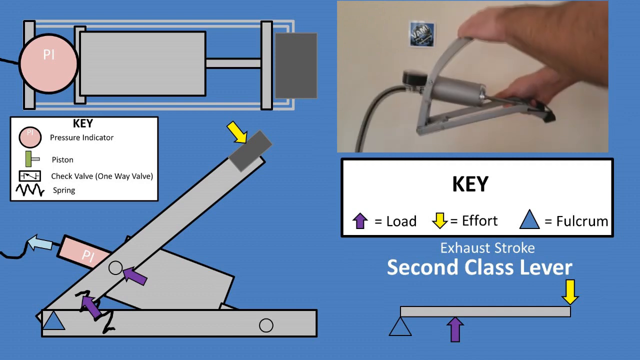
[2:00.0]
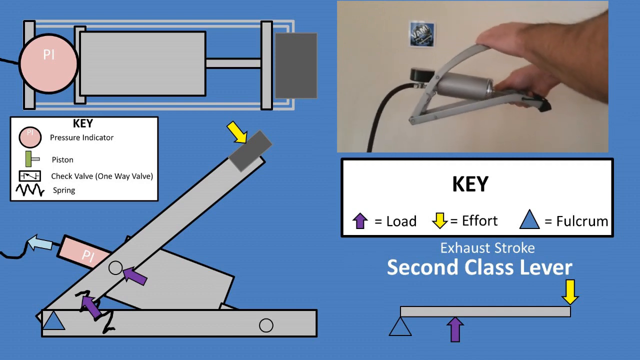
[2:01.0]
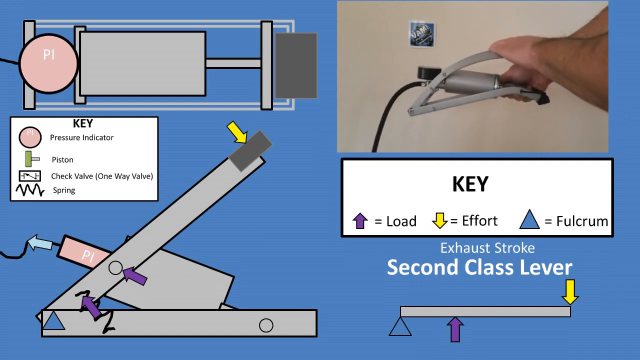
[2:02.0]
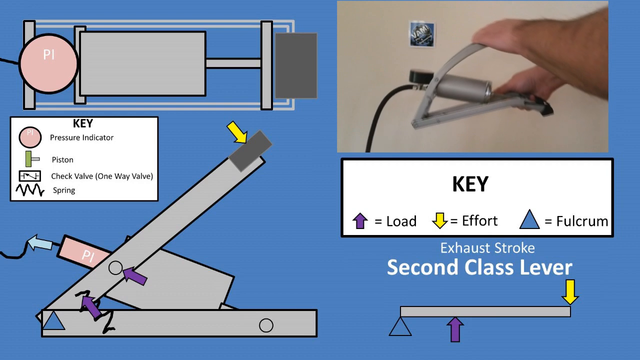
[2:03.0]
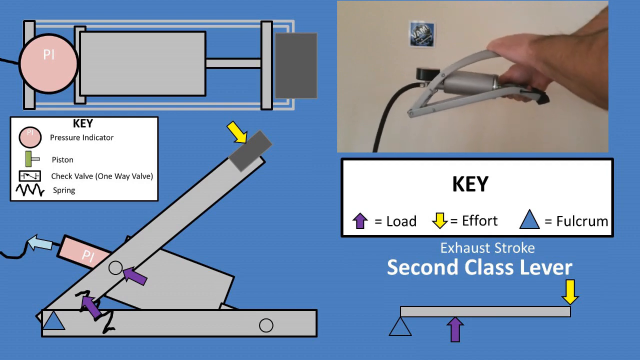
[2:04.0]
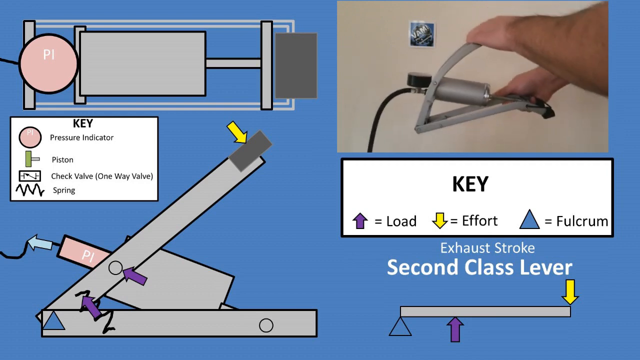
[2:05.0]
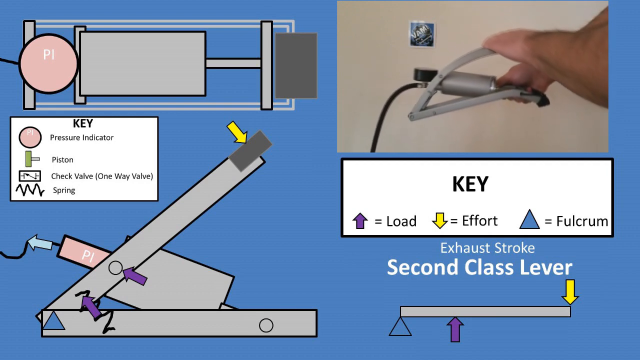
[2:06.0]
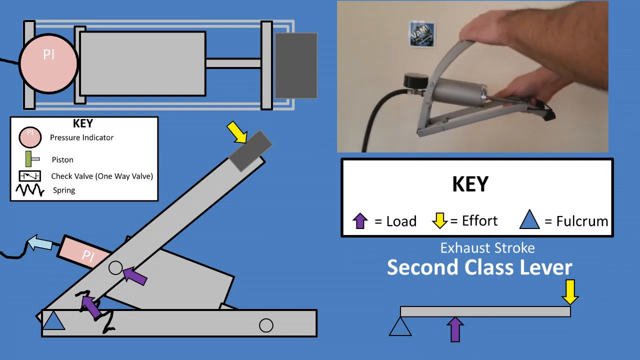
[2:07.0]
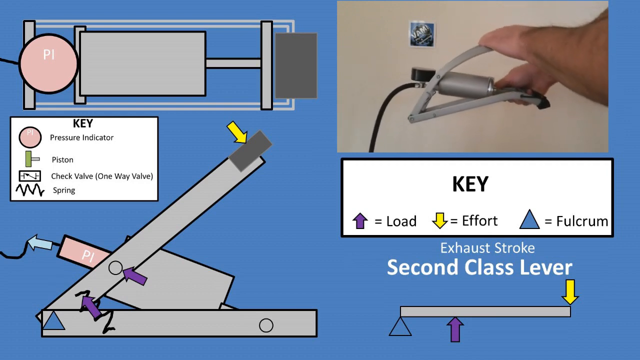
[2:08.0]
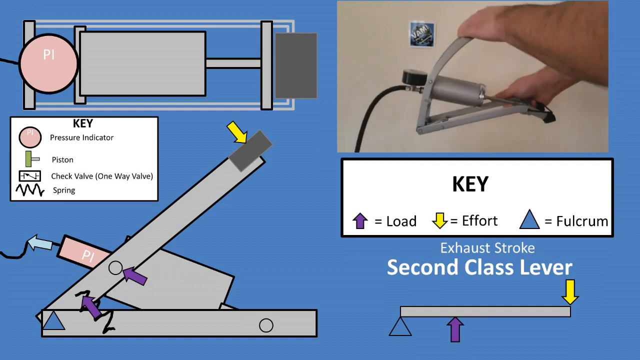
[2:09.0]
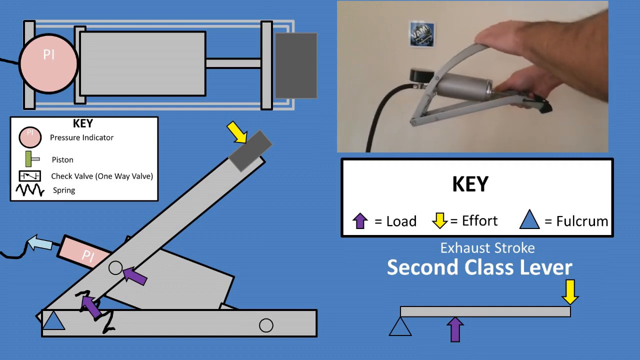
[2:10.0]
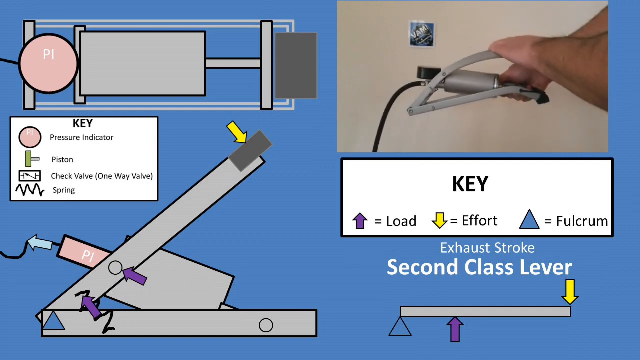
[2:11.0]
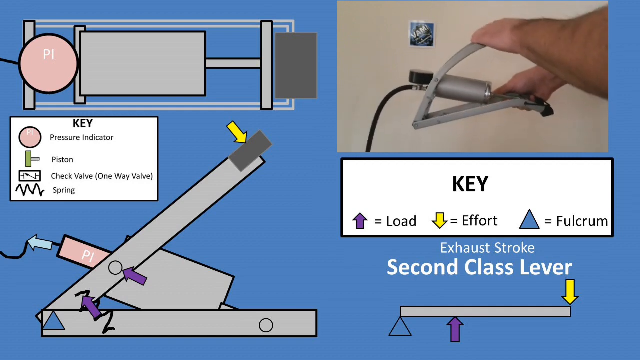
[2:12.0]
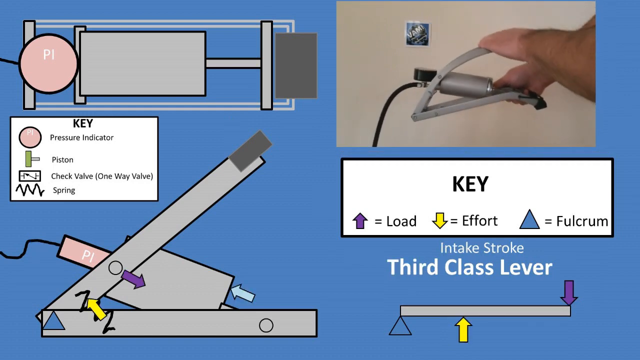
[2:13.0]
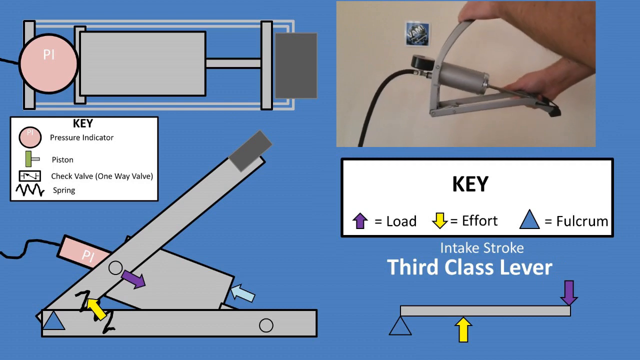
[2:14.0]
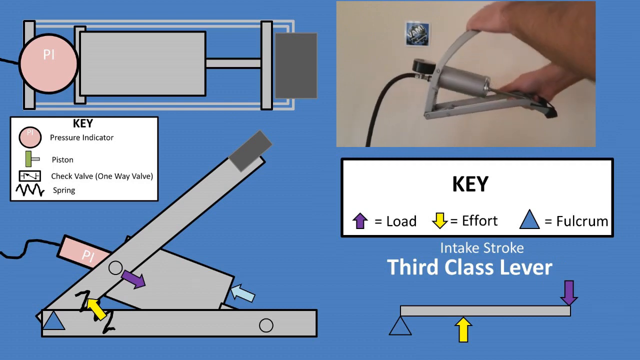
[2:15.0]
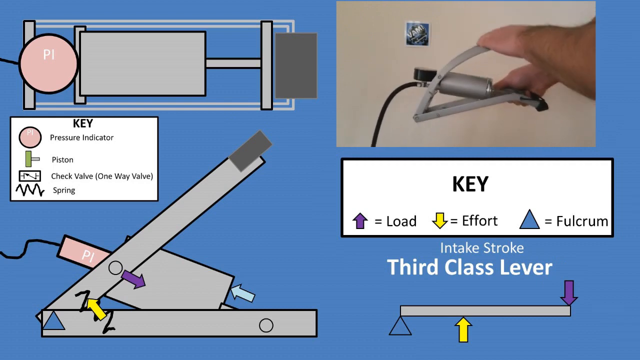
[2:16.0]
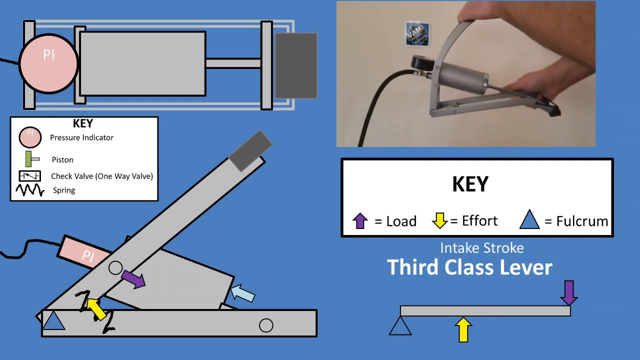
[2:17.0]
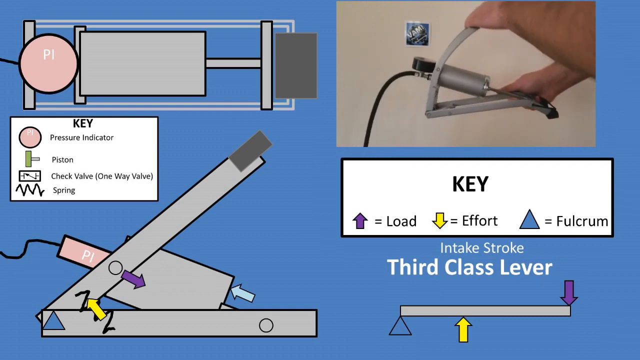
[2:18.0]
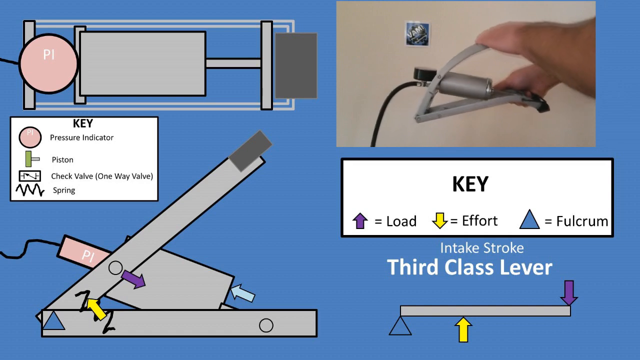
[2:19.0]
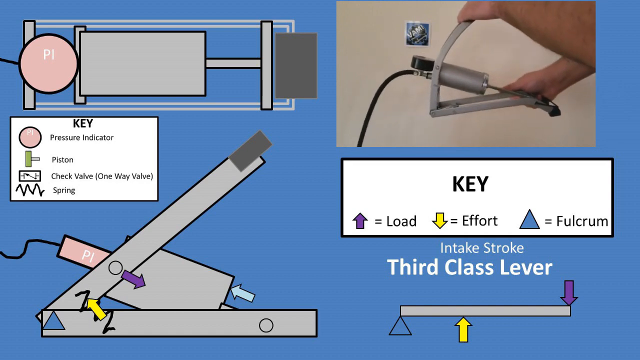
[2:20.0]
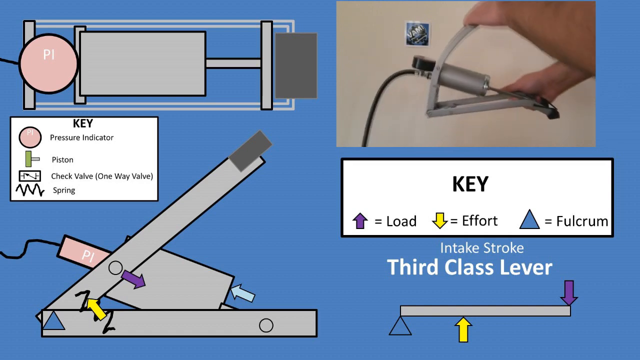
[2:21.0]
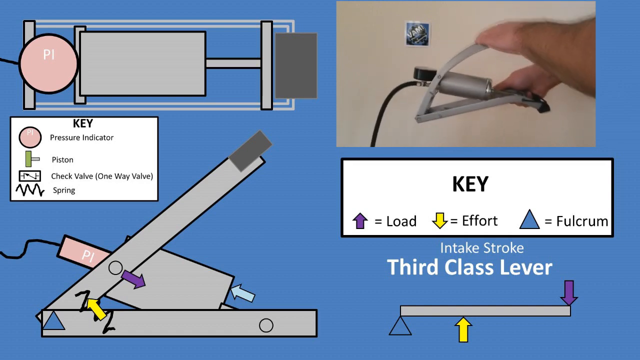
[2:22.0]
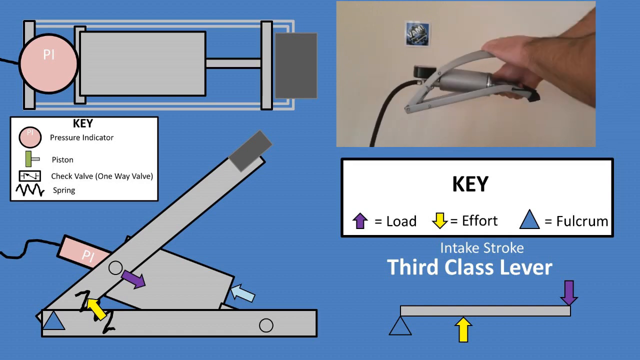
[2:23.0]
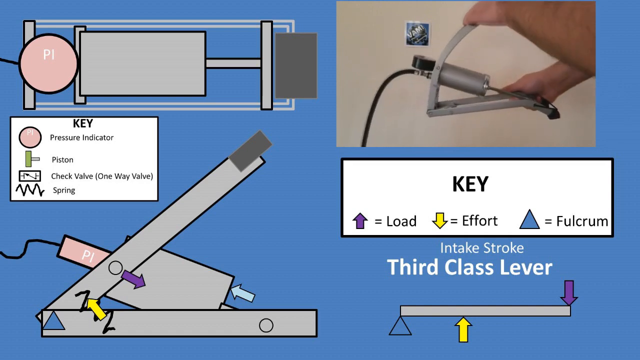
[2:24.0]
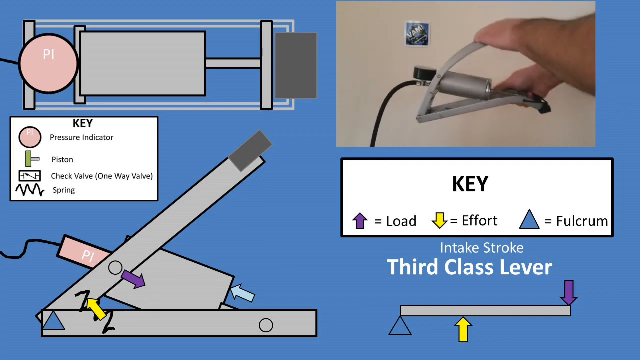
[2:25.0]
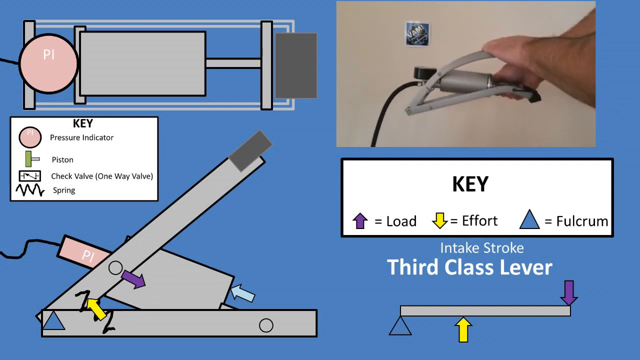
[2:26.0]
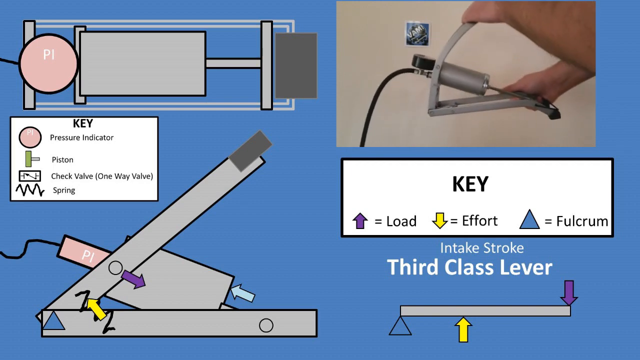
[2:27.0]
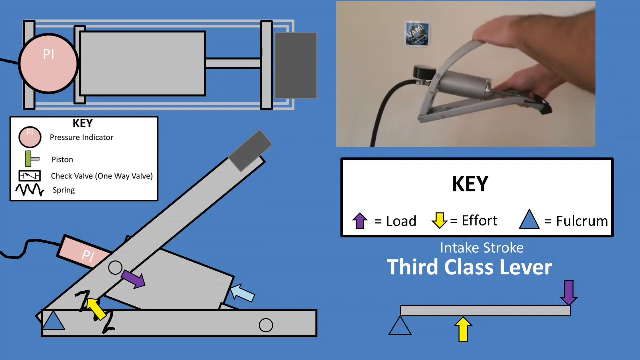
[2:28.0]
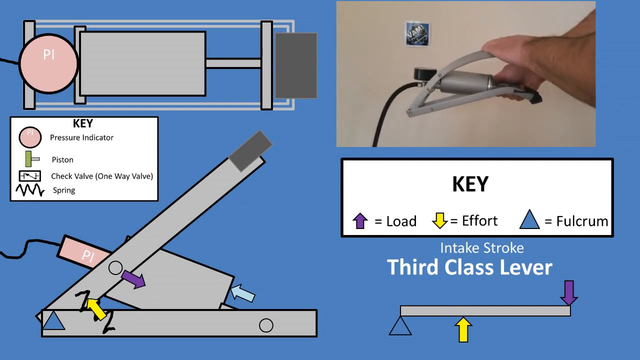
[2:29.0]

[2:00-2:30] The same video repeats in the upper right of the screen, with the person pushing on the two levers and moving the piston, while the diagrams are updated with arrows showing where the fulcrum is and where the effort and load are. A light blue arrow points out of the pressure indicator in the lower left diagram. The video then plays in reverse, repeatedly showing the person opening the device instead of closing it, pulling on the two levers so that the upper piece moves up and the lower piece moves down. The diagrams update to show the load going to the lower right into the piston, the blue arrow going to the upper left to show the movement direction, and the effort on the spring, with an arrow pointing to the upper left on the spring in the lower left diagram. At the very end, a red mug suddenly appears on the screen, rotating on a tabletop of some kind.